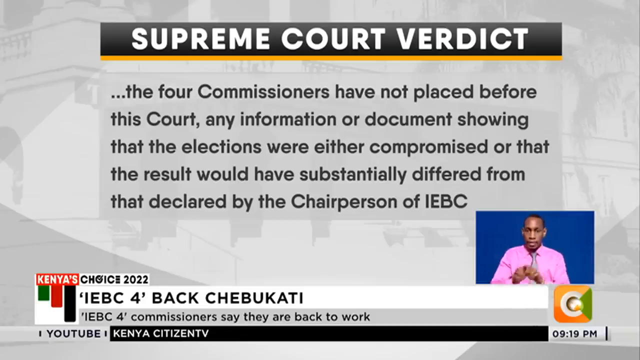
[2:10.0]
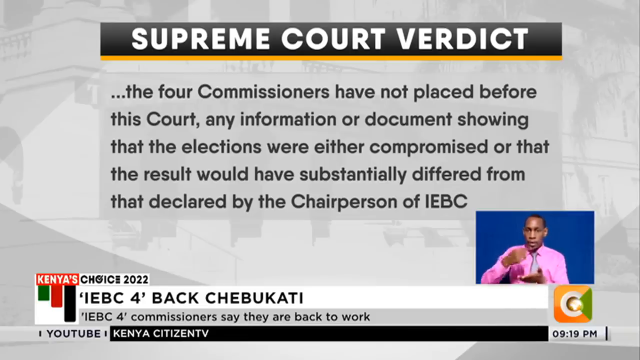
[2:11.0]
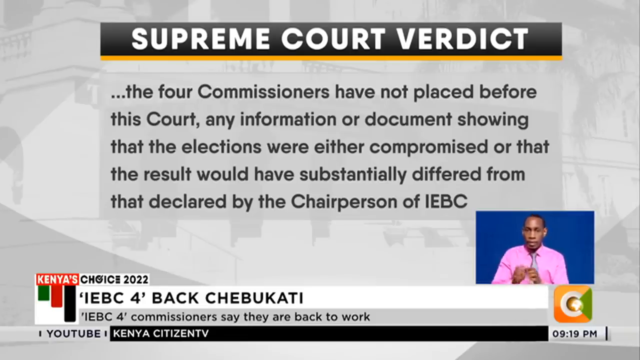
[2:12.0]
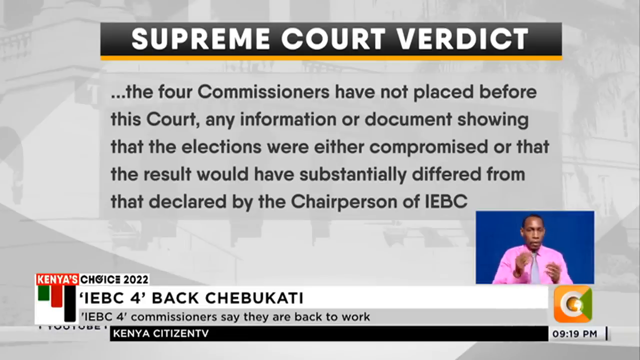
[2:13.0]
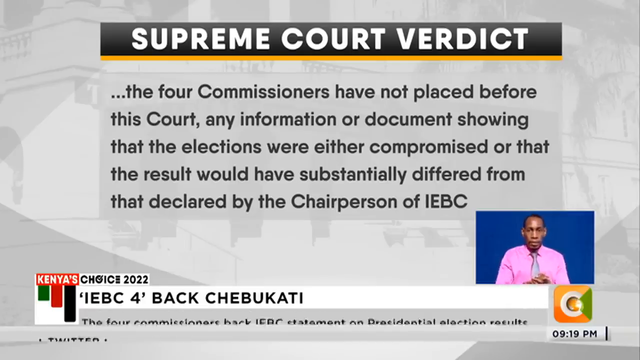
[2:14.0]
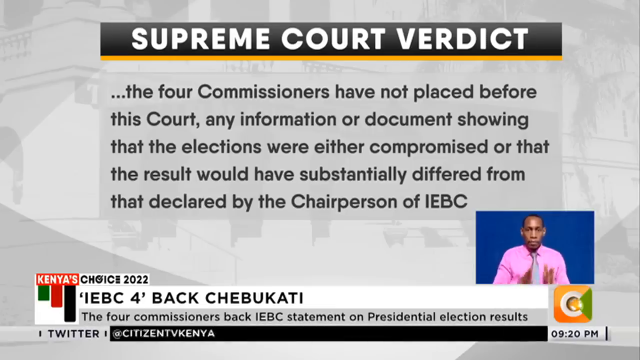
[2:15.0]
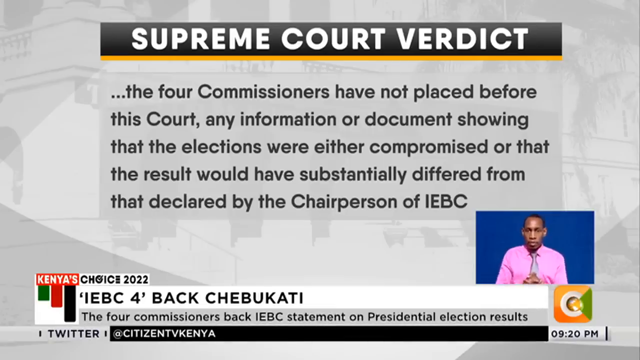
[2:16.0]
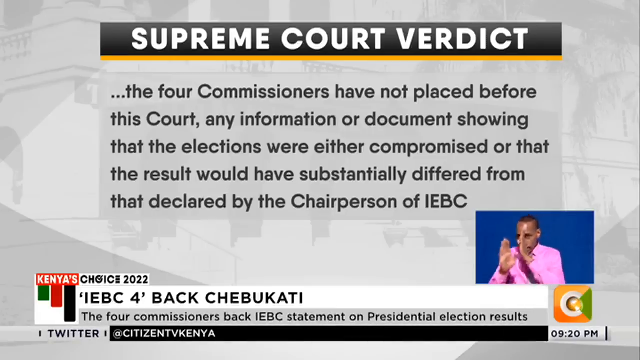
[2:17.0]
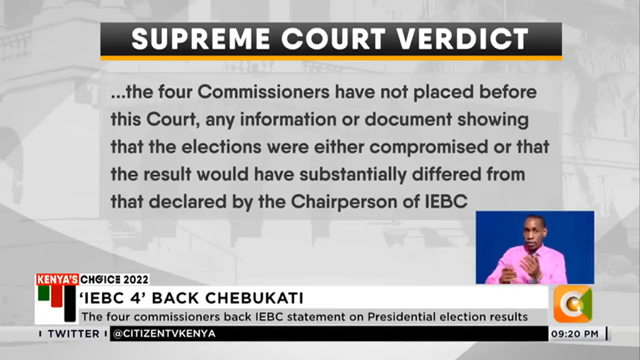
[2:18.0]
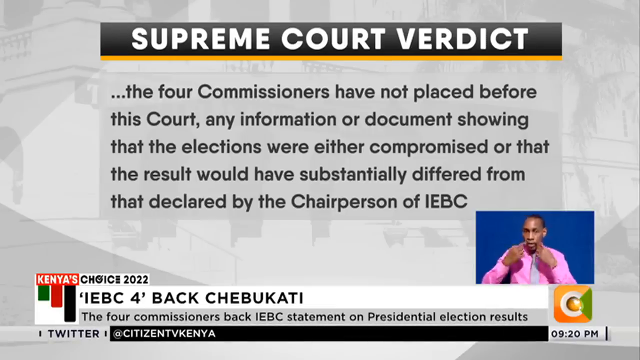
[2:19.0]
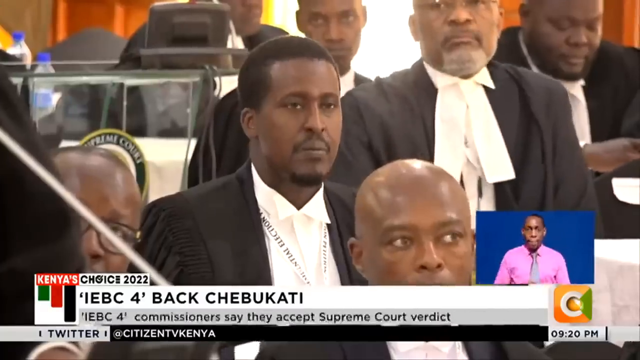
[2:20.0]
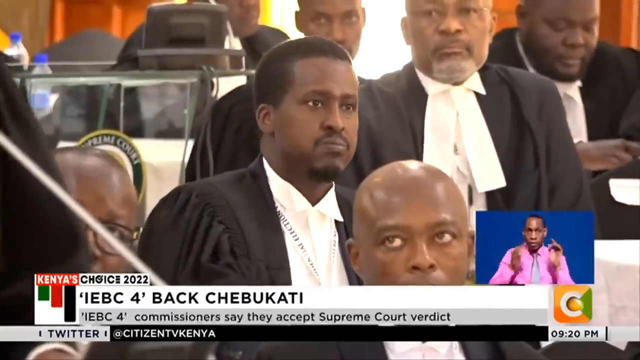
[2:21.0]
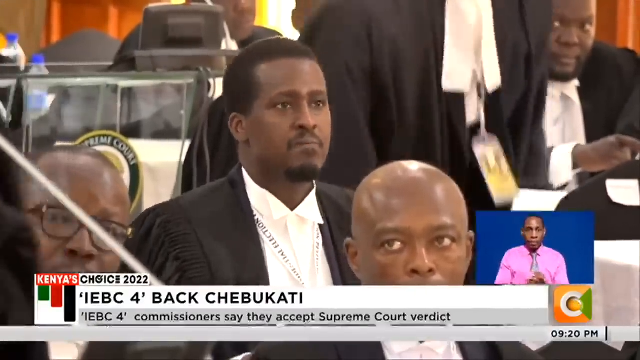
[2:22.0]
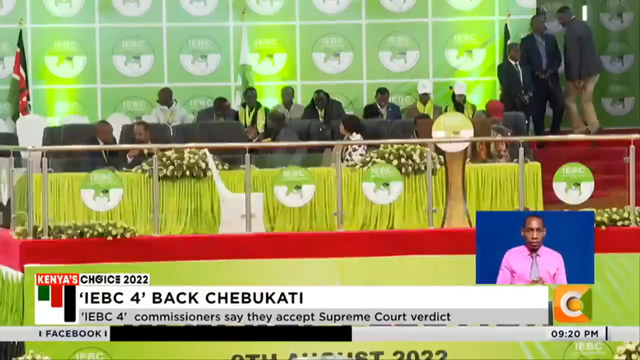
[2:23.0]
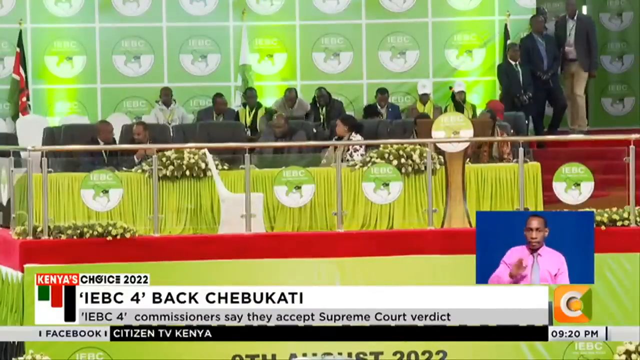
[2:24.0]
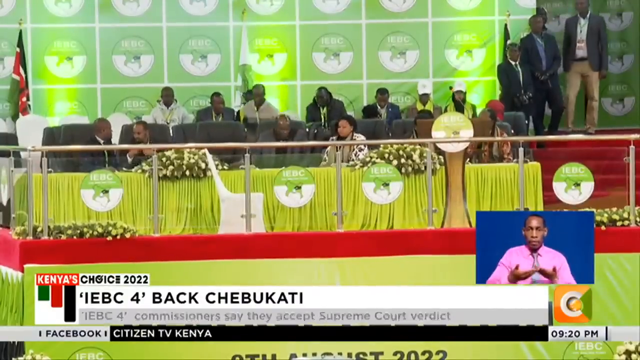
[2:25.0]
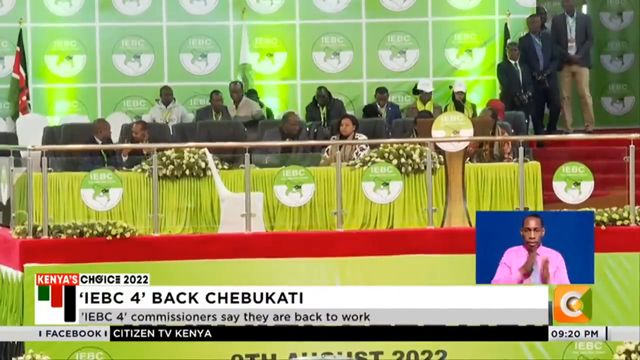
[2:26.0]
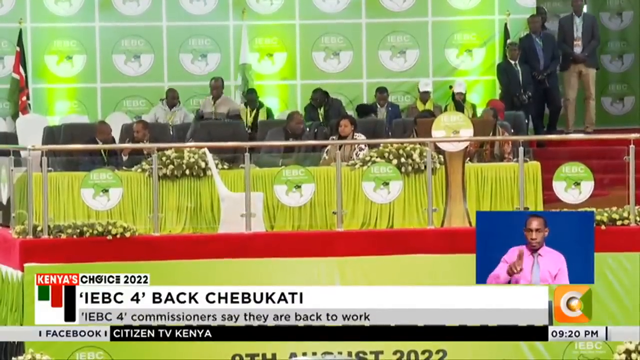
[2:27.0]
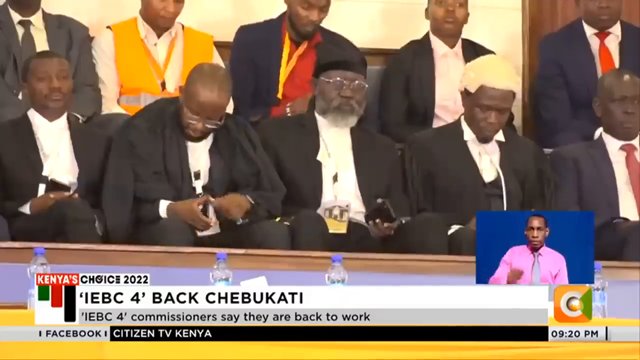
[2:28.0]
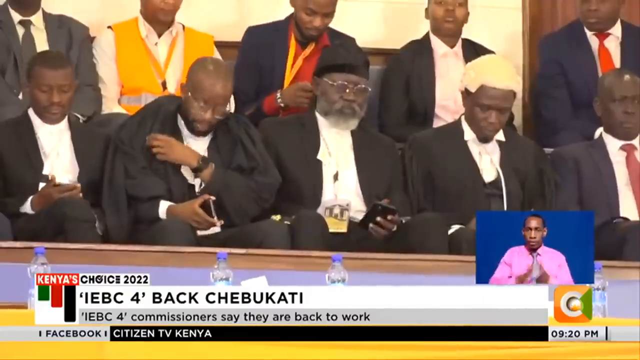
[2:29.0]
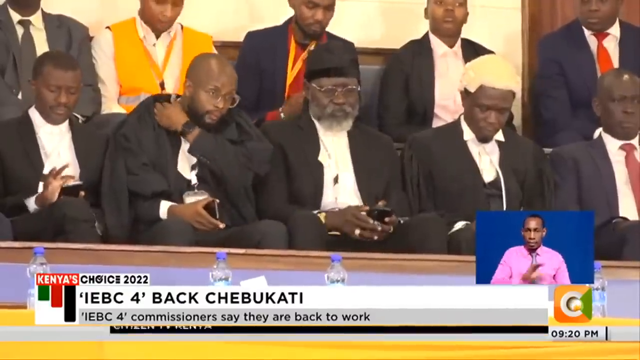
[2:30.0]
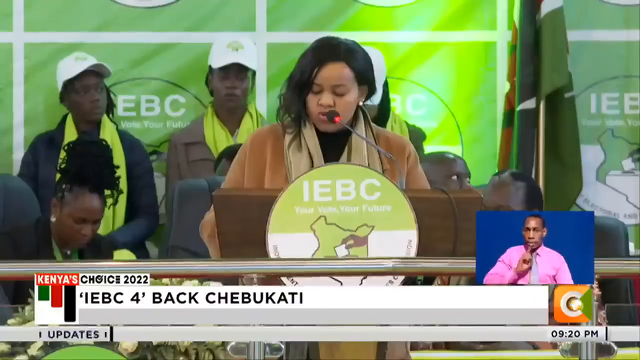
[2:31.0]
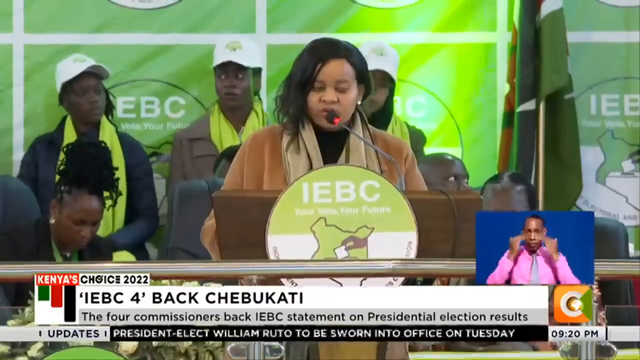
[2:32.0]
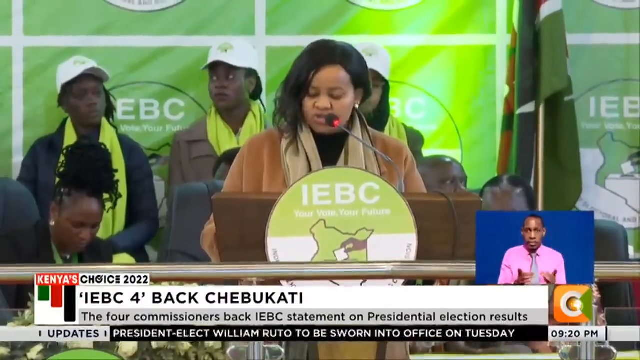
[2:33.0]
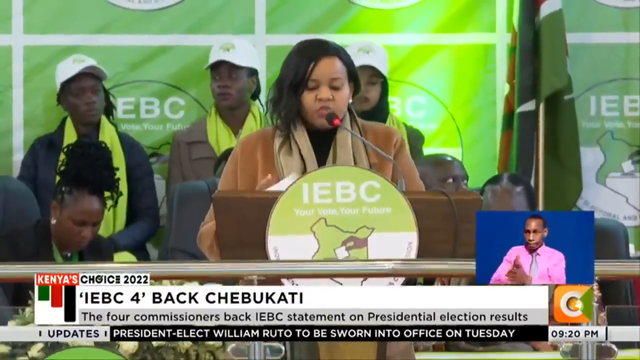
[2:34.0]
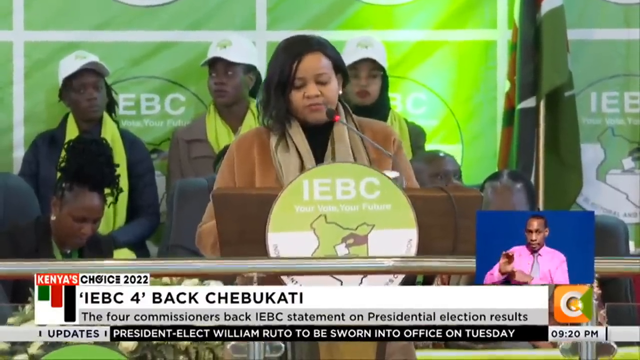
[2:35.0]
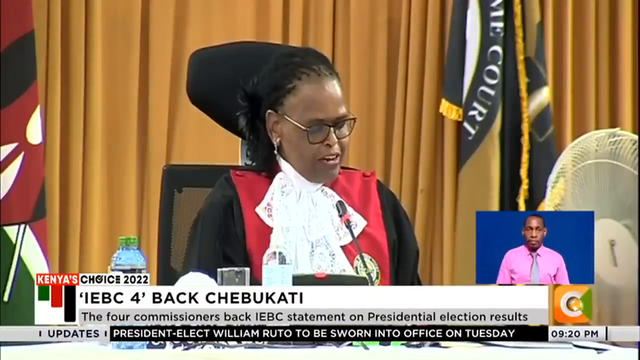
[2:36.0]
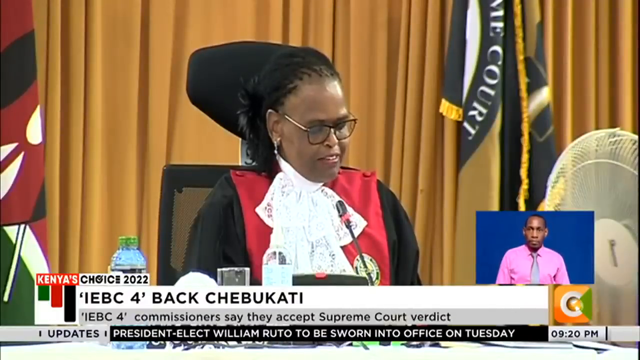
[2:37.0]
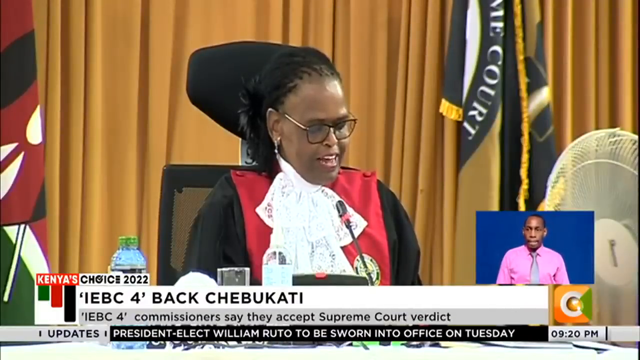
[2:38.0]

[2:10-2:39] Another quote from the Supreme Court reads "the four commissioners have not placed before this court any information or document showing that the elections were either compromised or that the result would have substantially differed from that declared by the chairperson of IEBC." Meanwhile, the man at the bottom right in a pink vest or pink suit continues performing sign language for non-hearing viewers. The report briefly shows more of the audience, cuts very quickly back to the Chief Justice, and returns to audience members sitting at a green IEBC section with the IEBC logo all over the place. More audience footage follows at what looks like an IEBC meeting, where one of the members, apparently the same lady in turquoise, speaks into a microphone. It then cuts right back to the Chief Justice; the two do not seem to be in the same area, and it looks like two different speeches, one responding to the other.